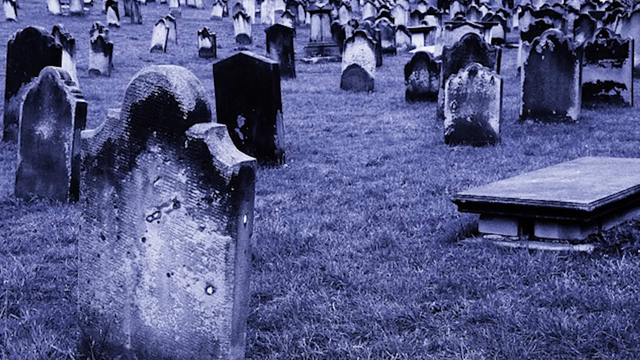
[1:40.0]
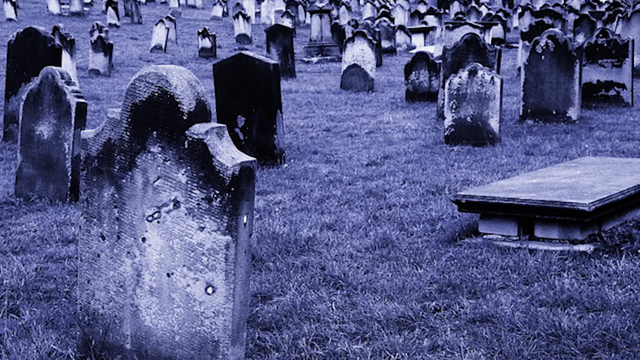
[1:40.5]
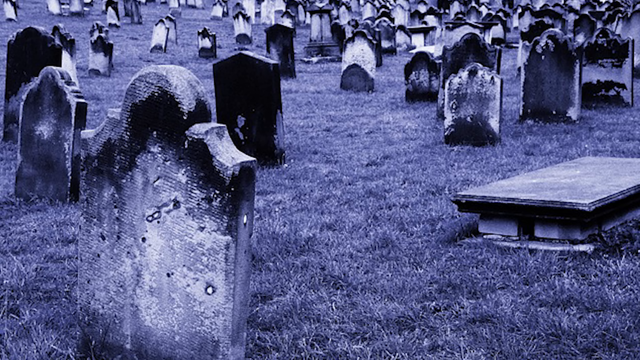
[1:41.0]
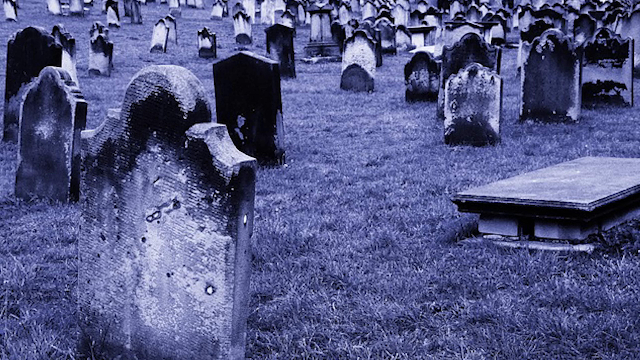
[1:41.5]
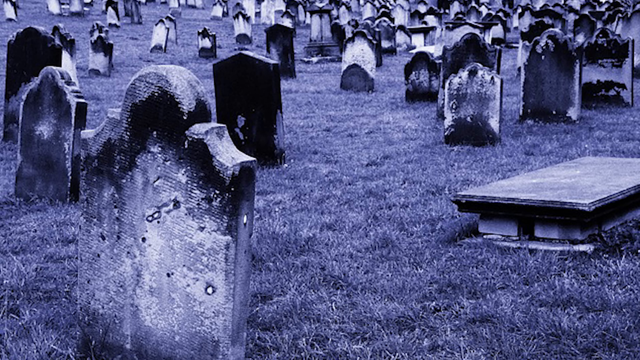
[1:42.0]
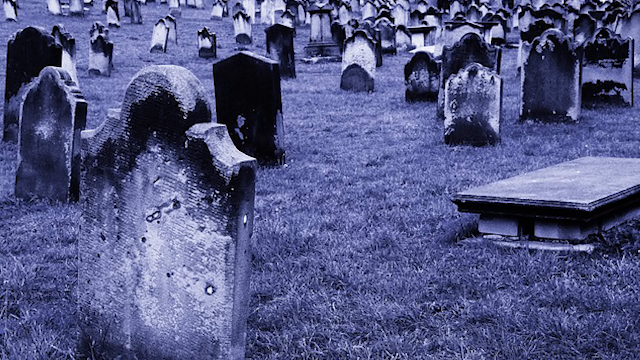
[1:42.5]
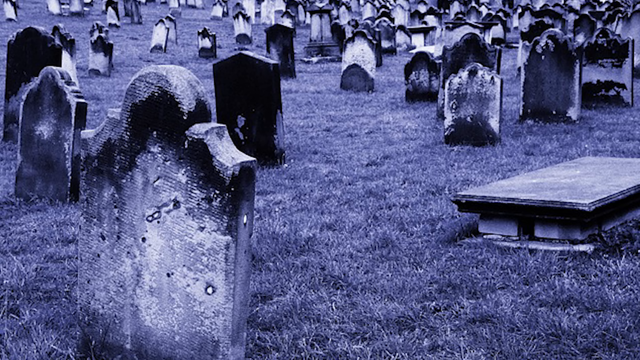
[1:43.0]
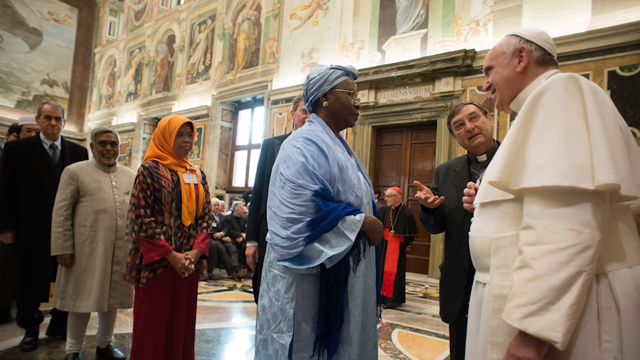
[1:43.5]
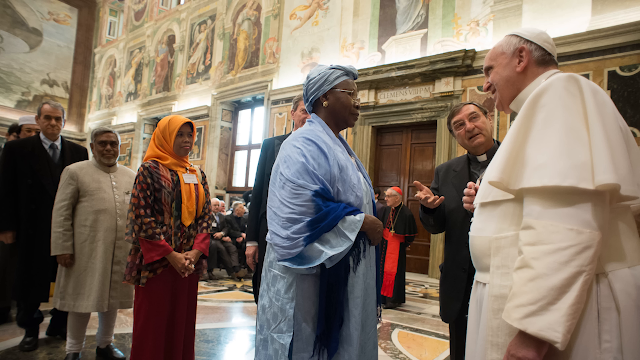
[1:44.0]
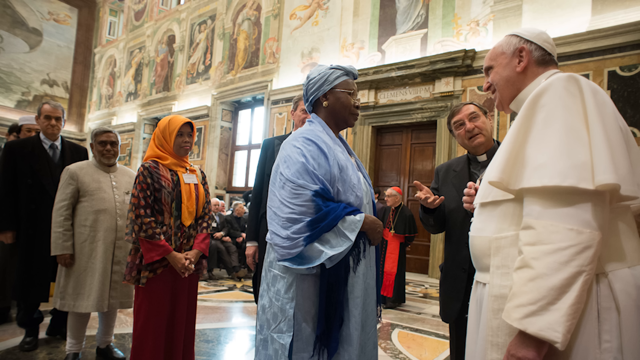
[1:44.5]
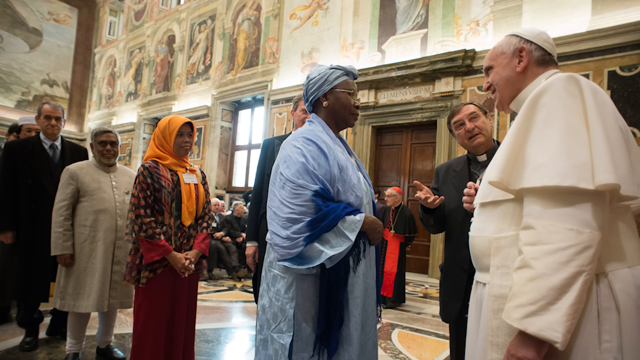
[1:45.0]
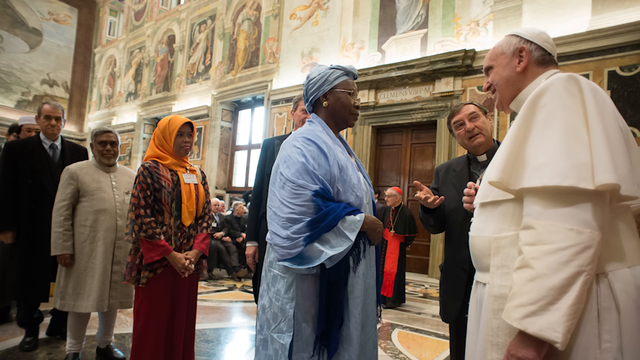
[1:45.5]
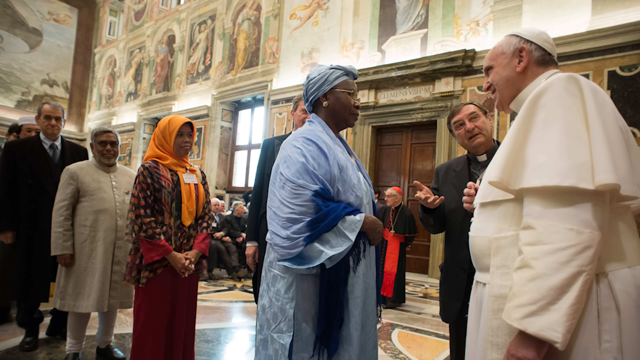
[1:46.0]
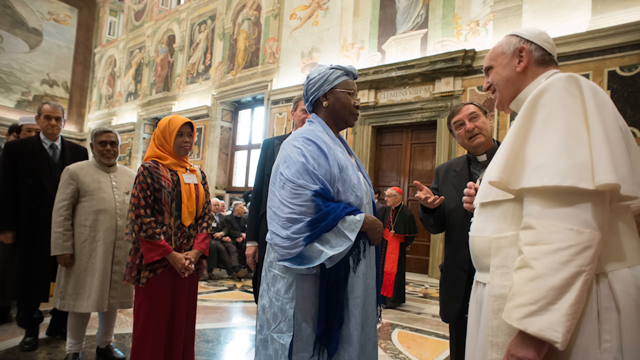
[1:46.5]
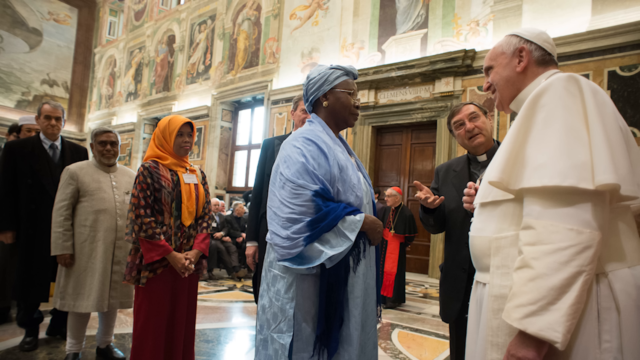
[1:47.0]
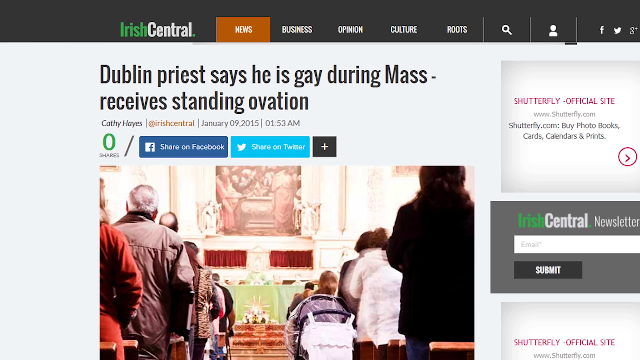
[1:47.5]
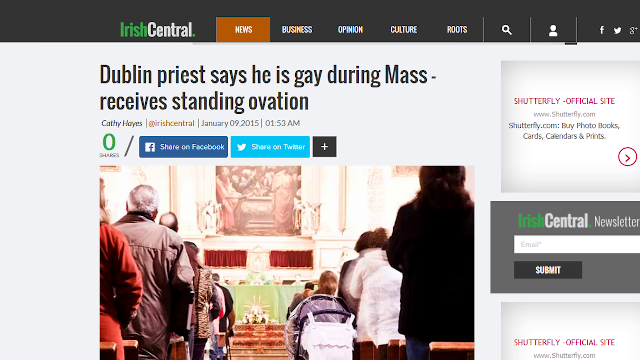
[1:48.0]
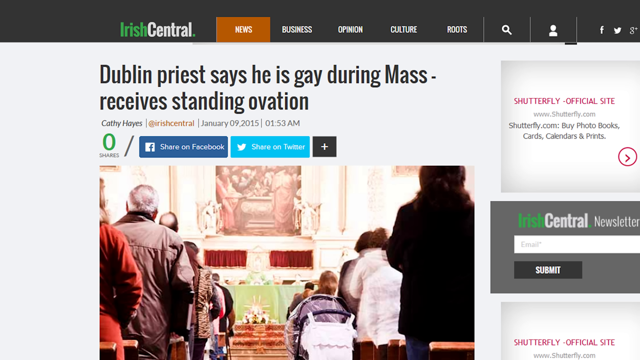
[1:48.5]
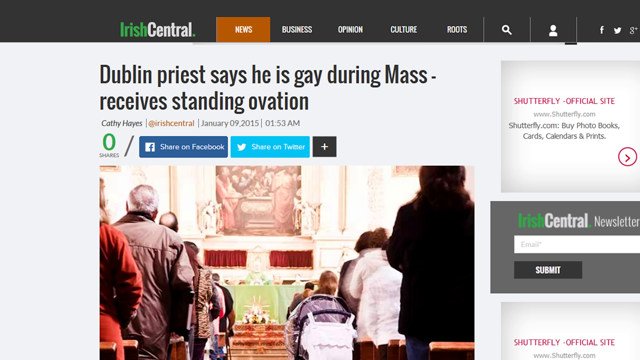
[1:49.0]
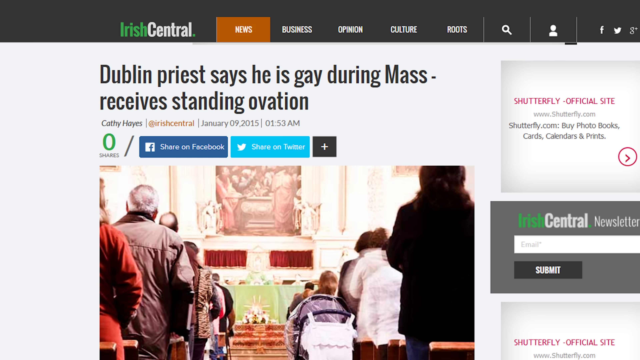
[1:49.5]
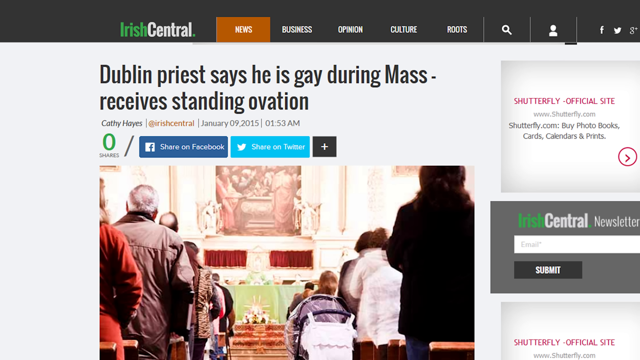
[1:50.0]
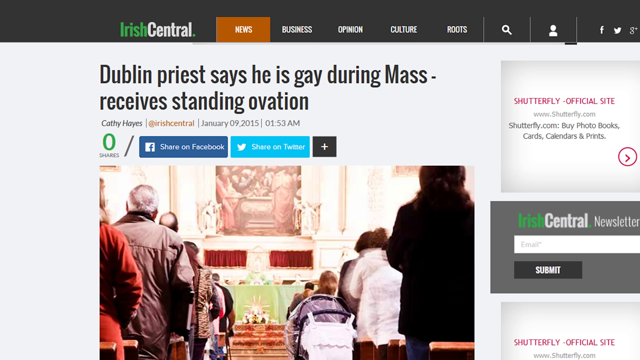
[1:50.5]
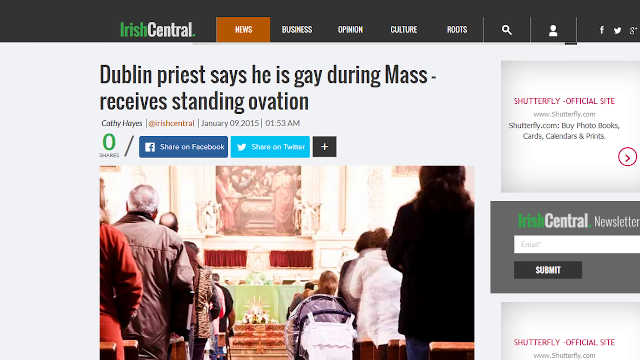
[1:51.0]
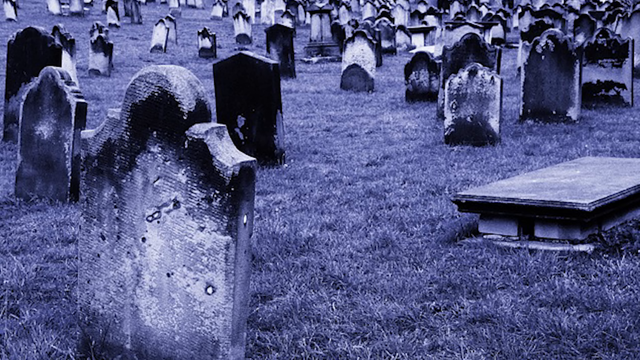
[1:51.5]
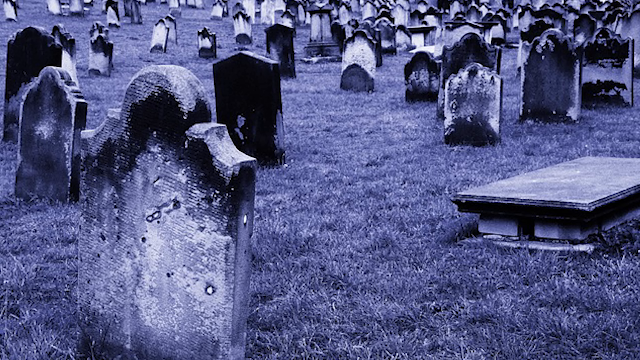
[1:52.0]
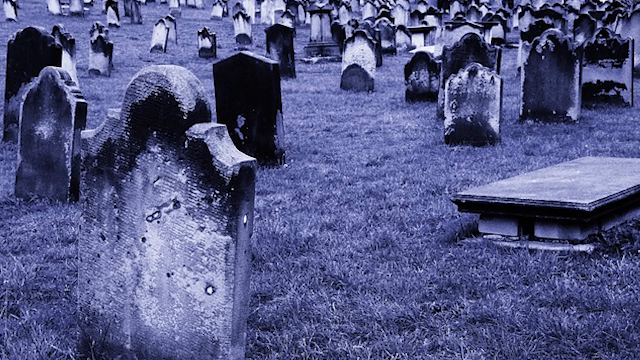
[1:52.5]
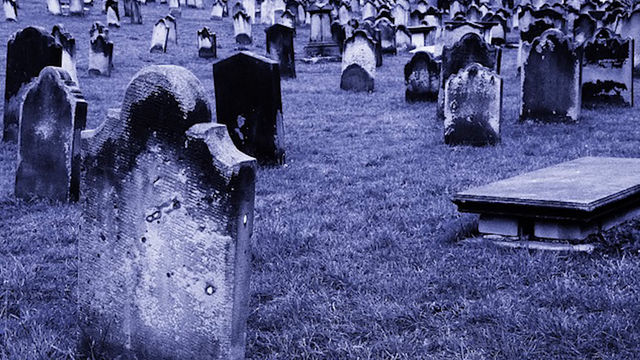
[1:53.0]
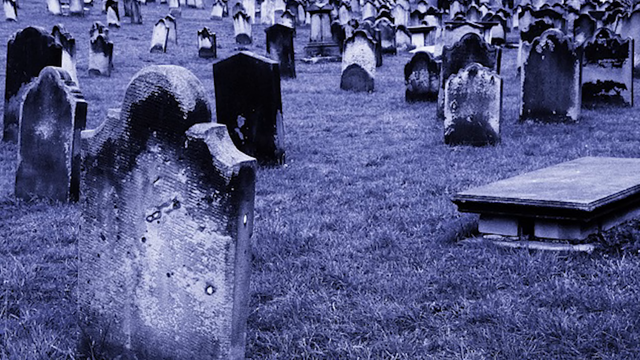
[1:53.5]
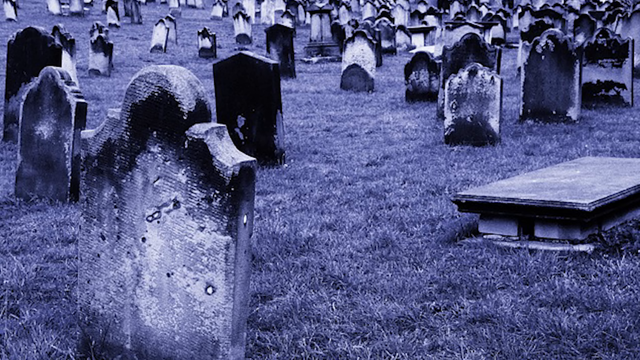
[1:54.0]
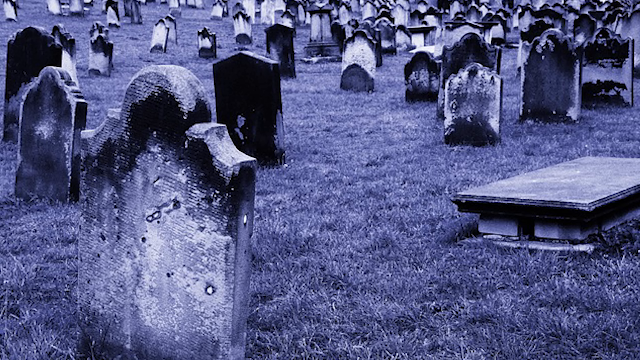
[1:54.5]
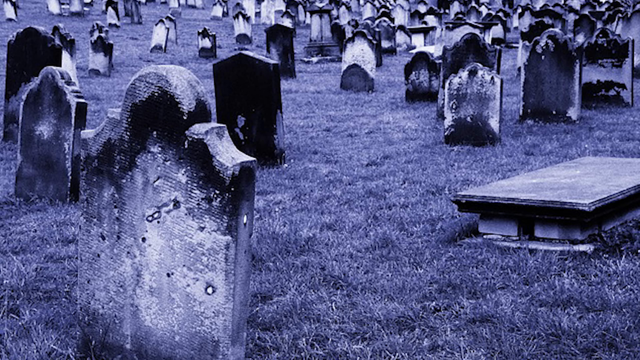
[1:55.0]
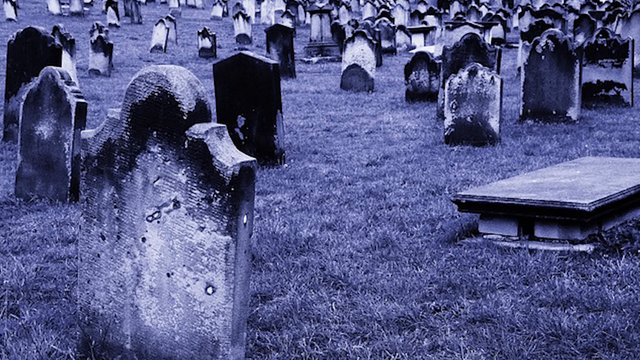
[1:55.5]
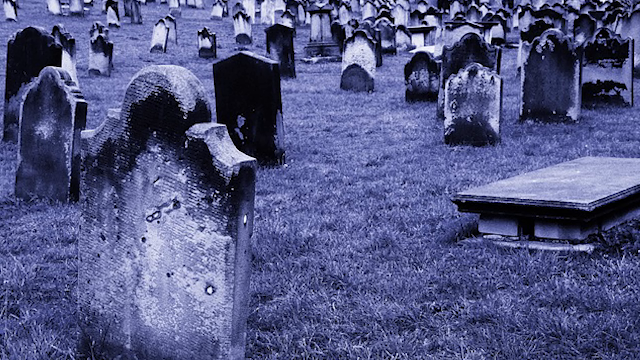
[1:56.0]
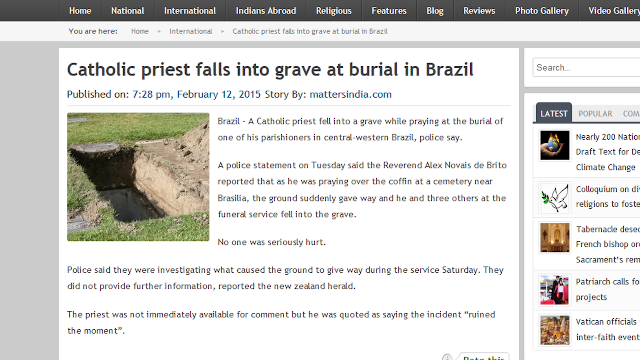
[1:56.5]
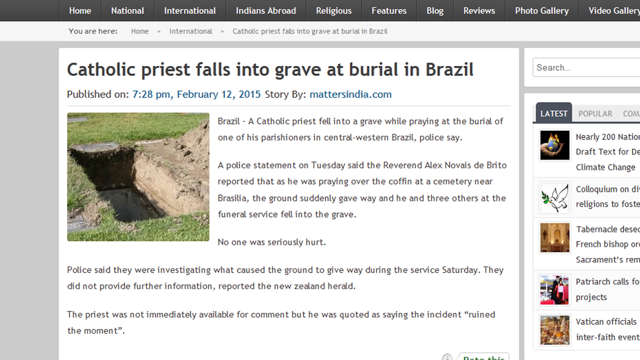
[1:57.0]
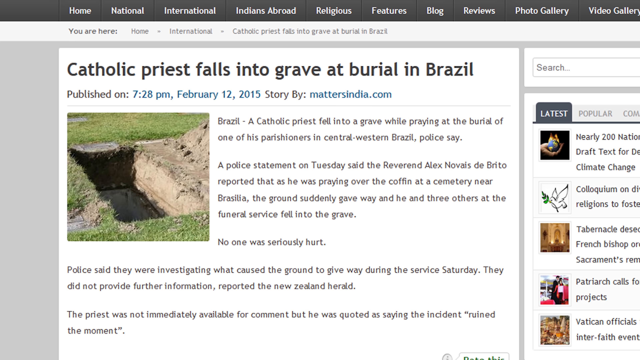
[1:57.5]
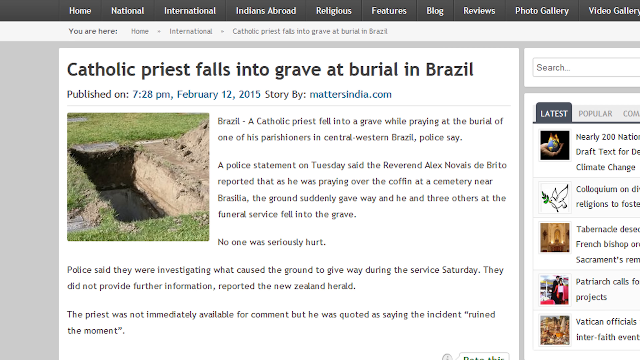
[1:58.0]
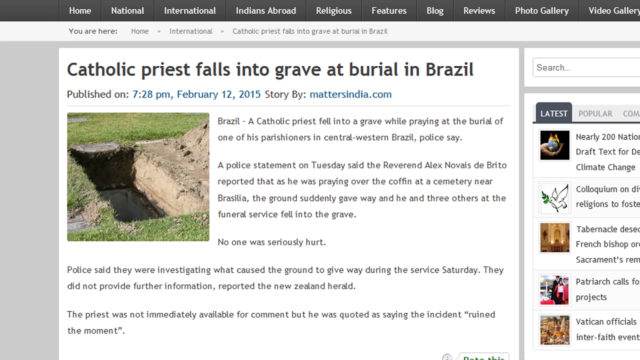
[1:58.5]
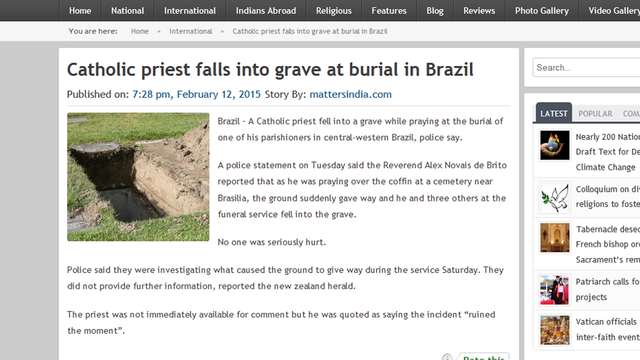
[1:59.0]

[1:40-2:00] On the right side of the screen a man stands facing to his right, so only his left side is visible. He wears a white beanie hat and a white robe; he is the Pope. In front of him, facing him, is a black woman with glasses, a light blue head wrap and a light blue robe. Behind her is a woman wearing a long orange head wrap and a maroon and orange spotted robe, and behind her is a man in a long white suit jacket. They are standing in a church, and pictures of angels and saints are up on the wall in the background. The image cuts to a page that looks like a webpage, headed "A Dublin priest says he is gay during mass. Receive standing ovation.", with a picture of a mass underneath.